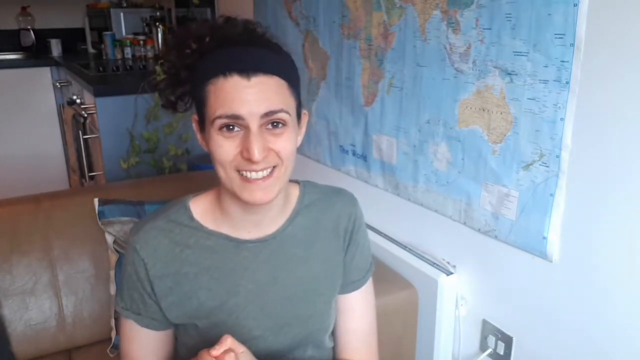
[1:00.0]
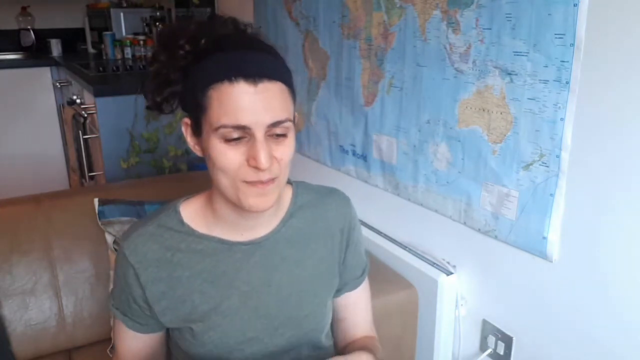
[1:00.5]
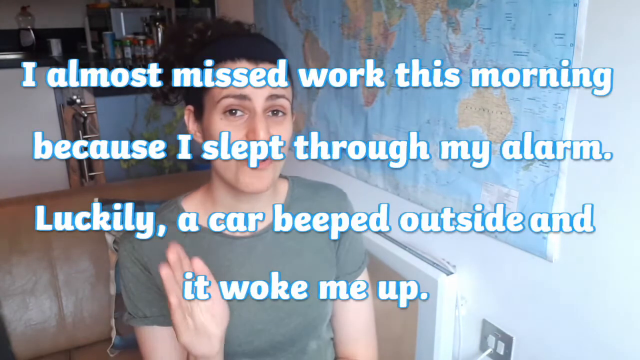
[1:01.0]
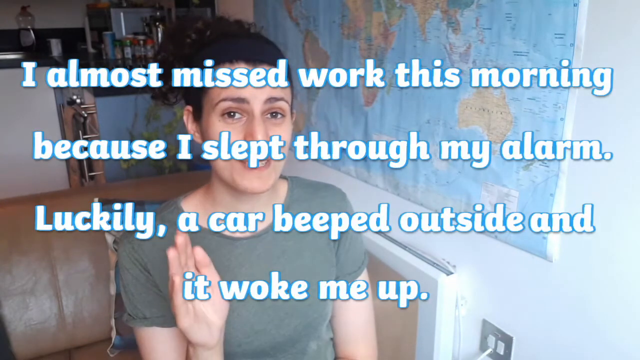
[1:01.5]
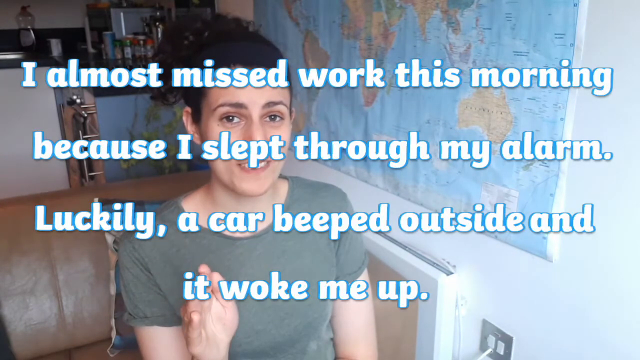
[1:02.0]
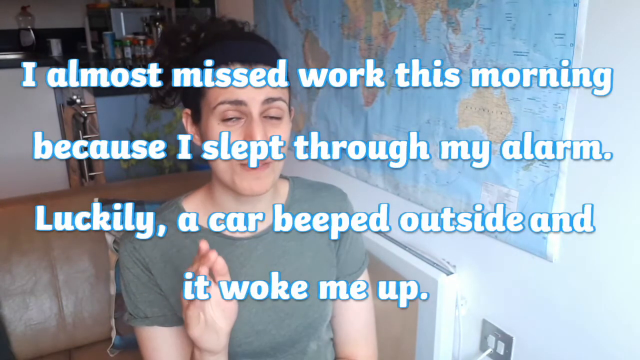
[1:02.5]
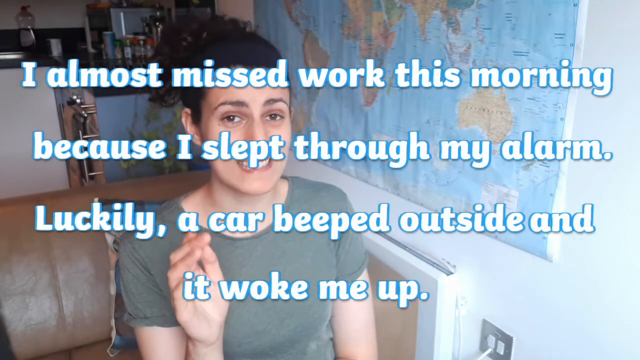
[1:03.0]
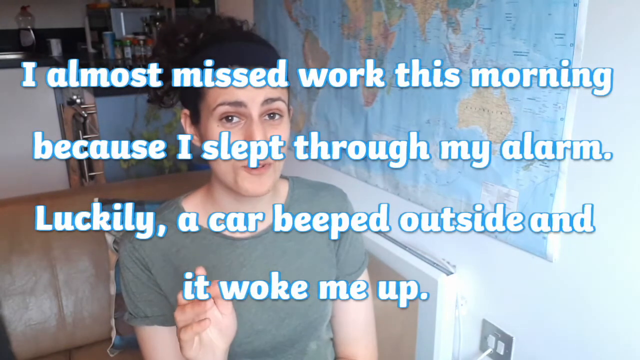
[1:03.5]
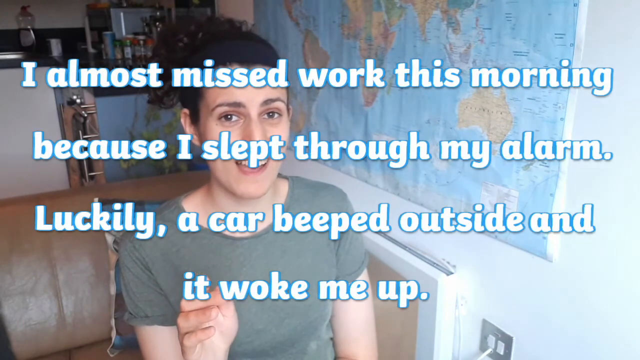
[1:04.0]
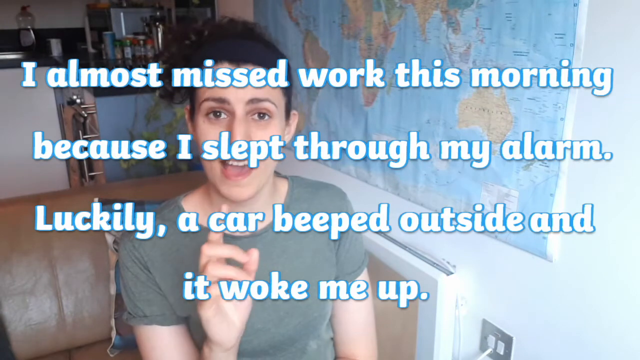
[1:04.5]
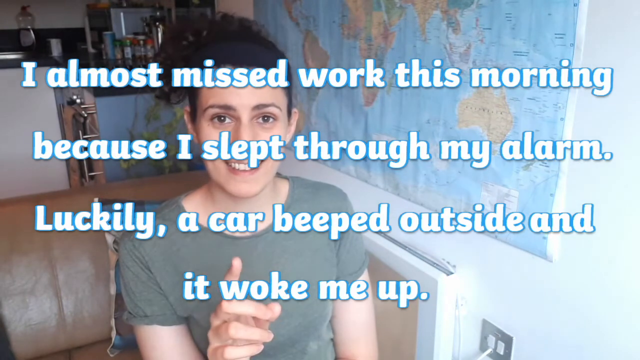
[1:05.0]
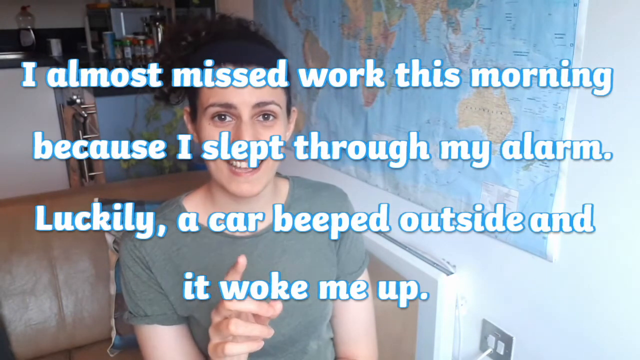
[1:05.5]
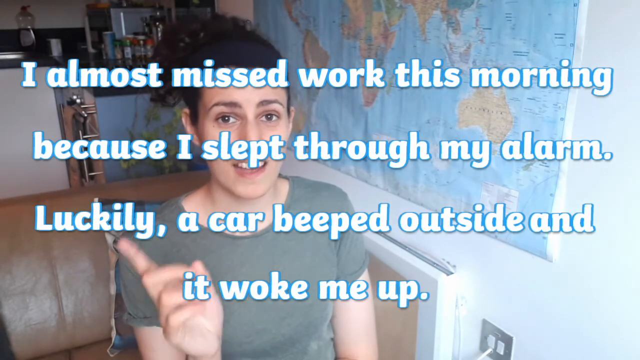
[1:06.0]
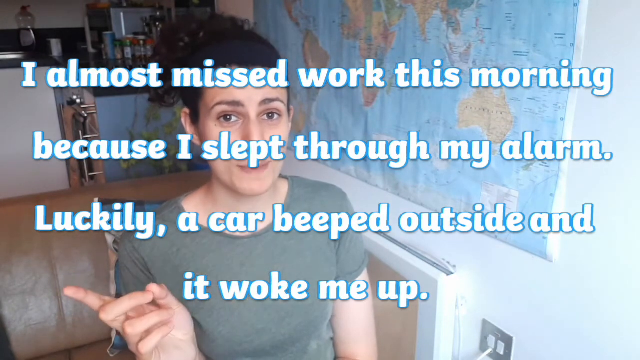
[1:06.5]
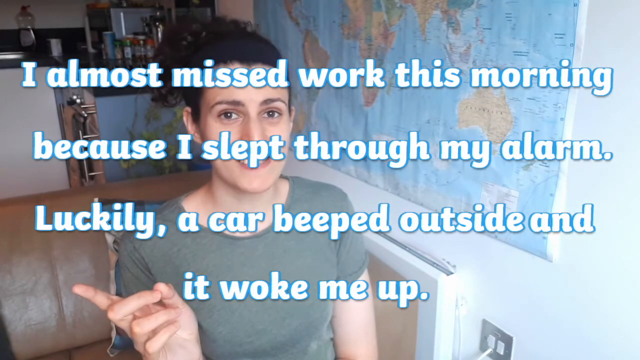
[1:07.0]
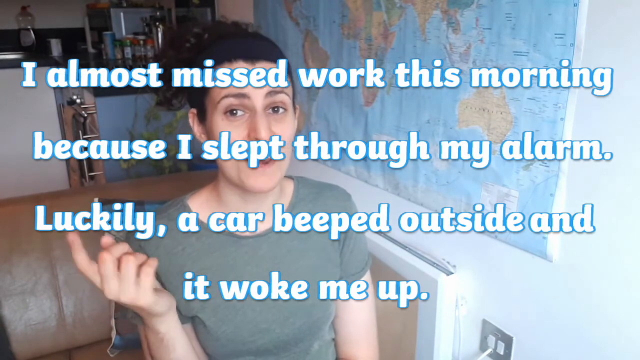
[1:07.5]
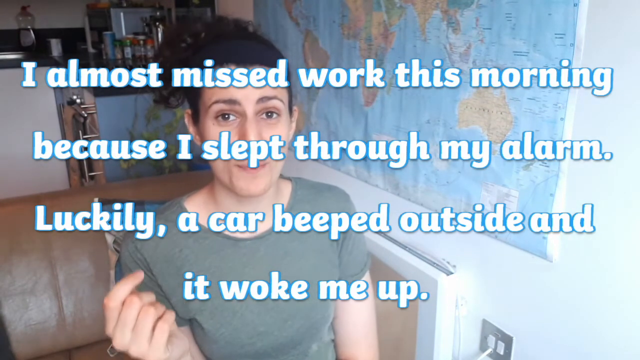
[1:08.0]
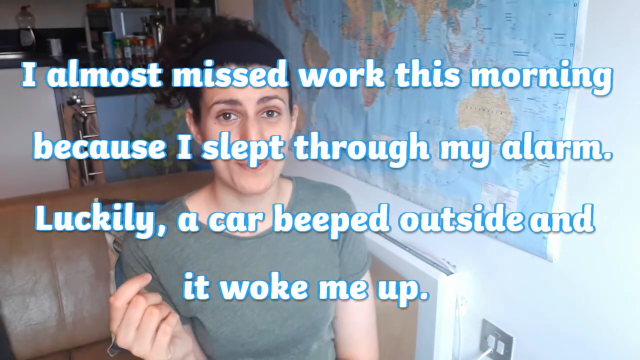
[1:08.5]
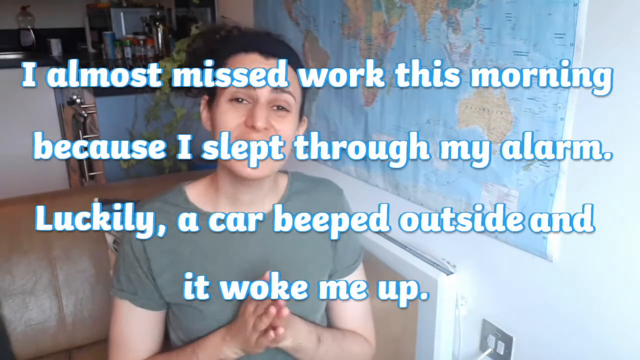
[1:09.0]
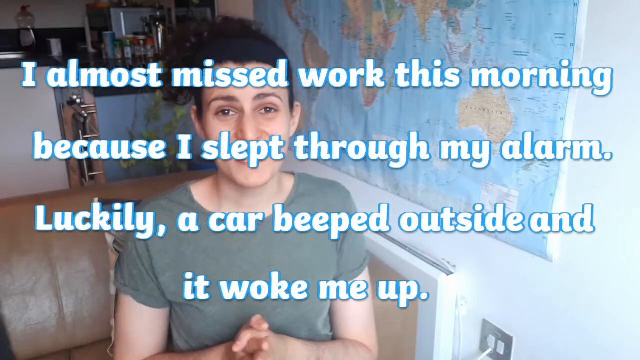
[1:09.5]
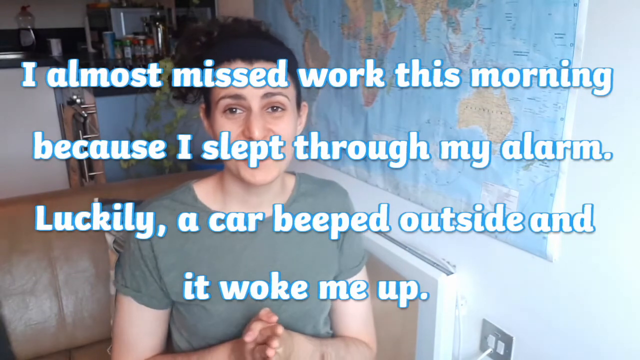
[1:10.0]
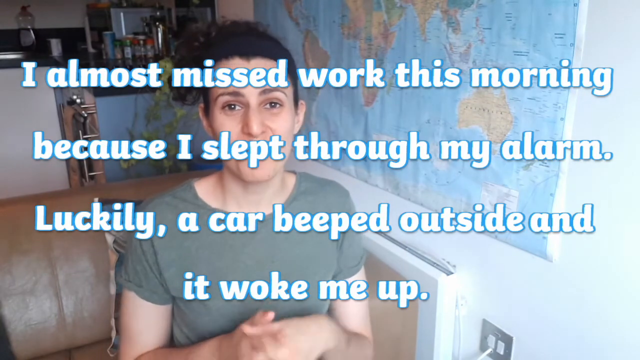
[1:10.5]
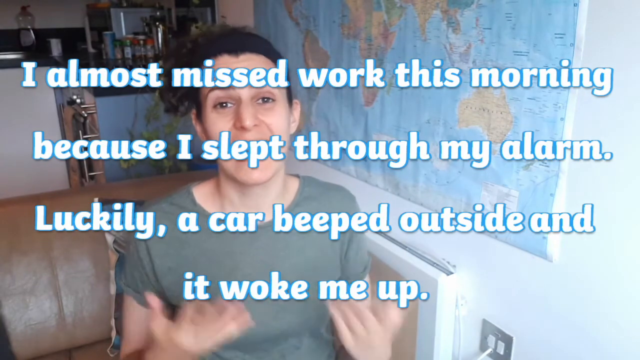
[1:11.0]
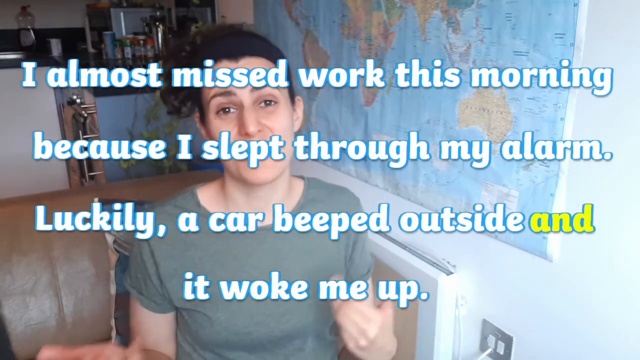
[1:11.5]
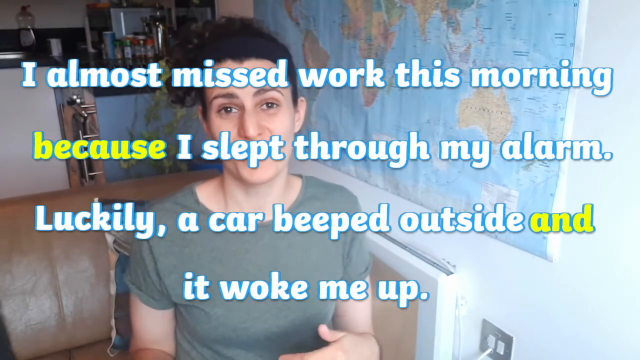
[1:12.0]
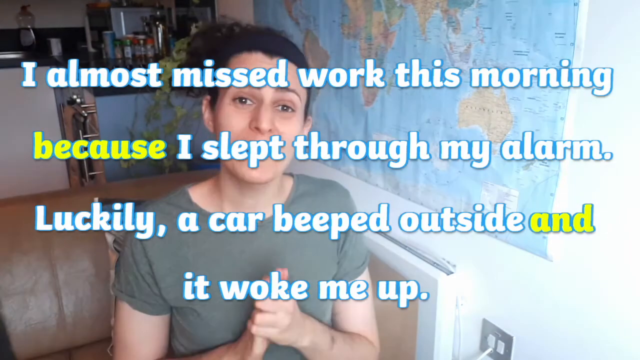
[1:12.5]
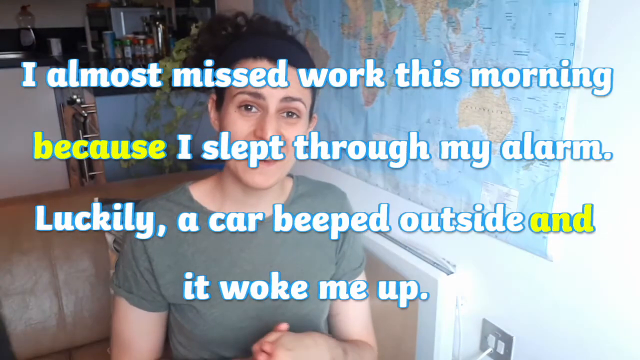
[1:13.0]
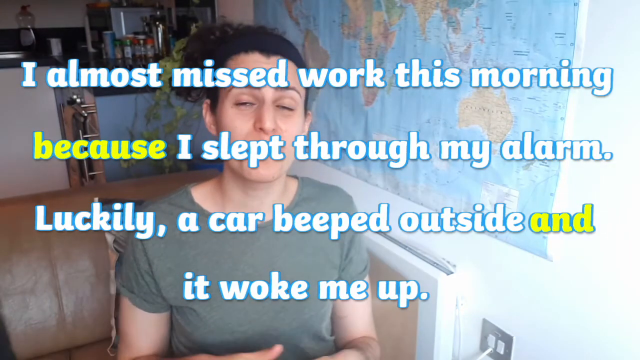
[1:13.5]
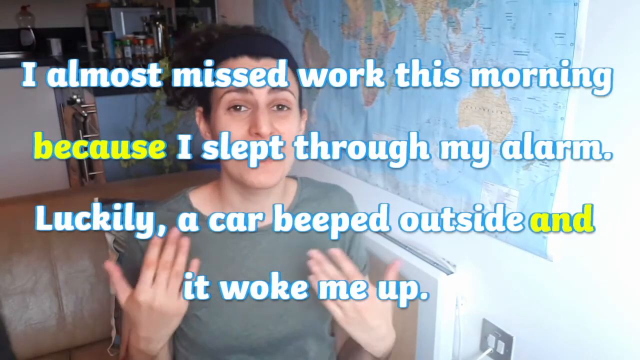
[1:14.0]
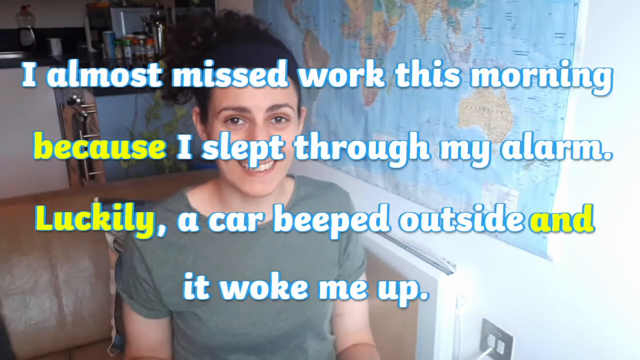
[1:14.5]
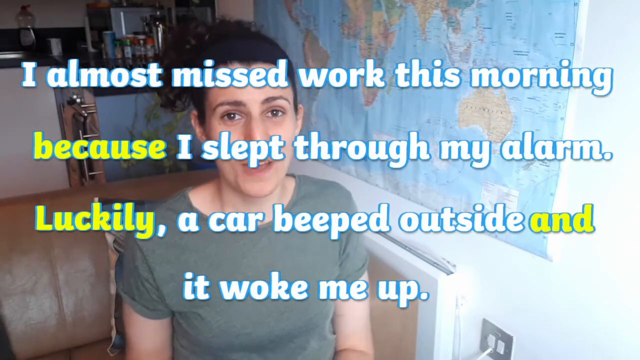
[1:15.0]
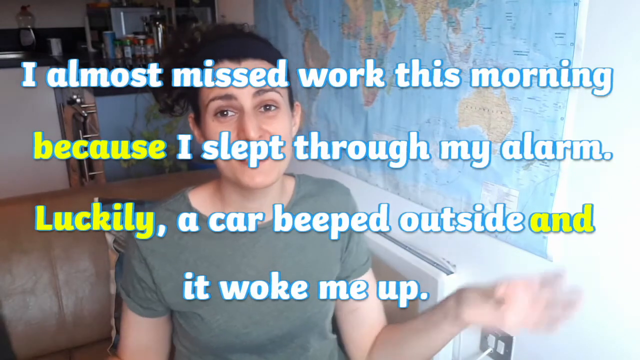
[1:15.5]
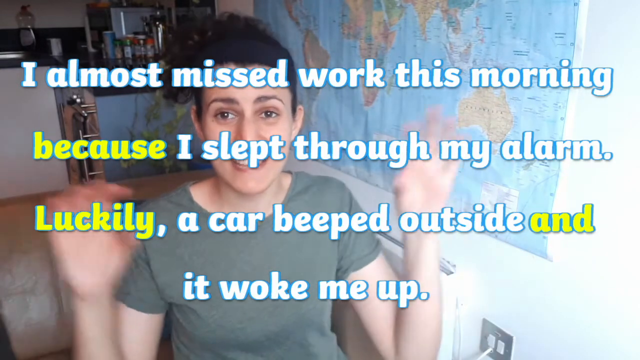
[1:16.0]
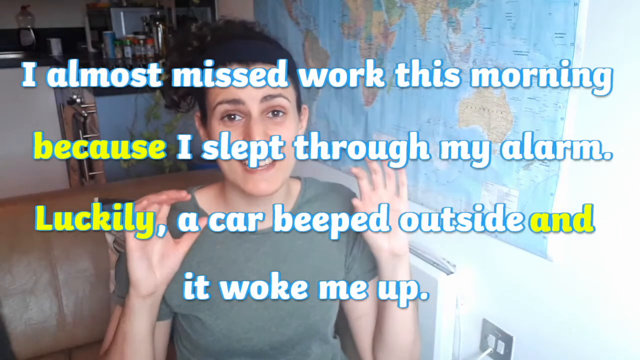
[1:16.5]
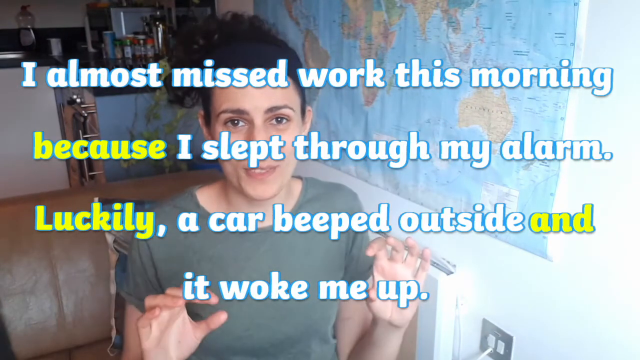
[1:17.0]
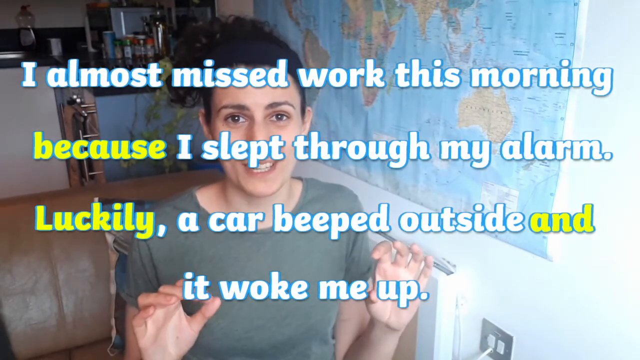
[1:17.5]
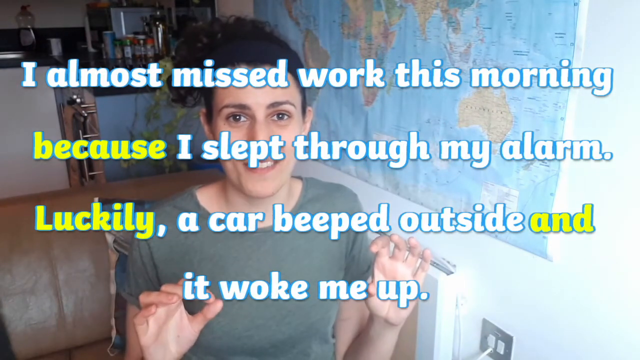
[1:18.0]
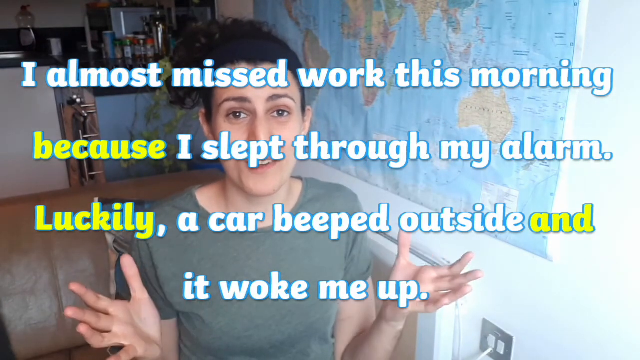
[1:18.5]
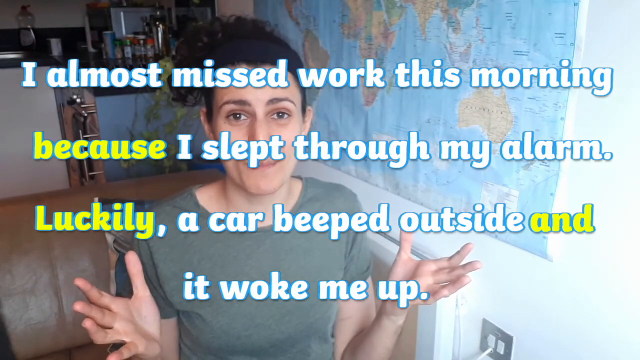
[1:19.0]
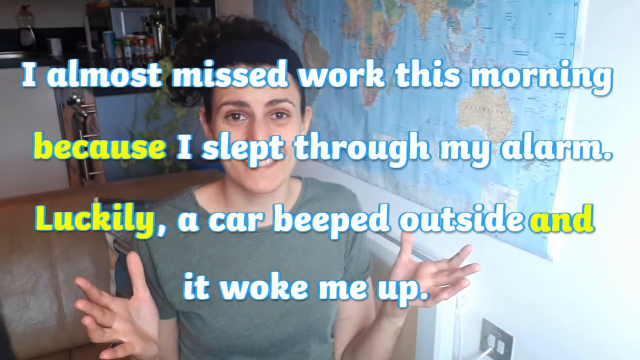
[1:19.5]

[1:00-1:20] The woman is sitting at a seat, apparently with a kitchen behind her. She says, "I almost missed work this morning because I slept through my alarm. Luckily, a car beeped outside and it woke me up." She points out the words "because" and "and"; "because," "luckily," and "and" are all in red. The words are kind of in front of her as she keeps talking.